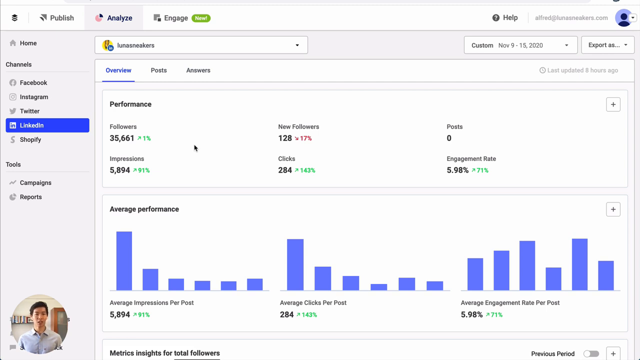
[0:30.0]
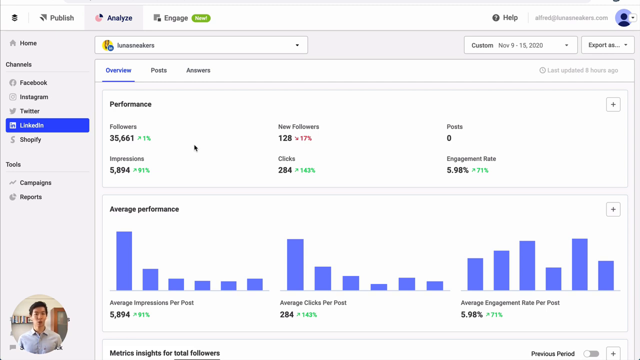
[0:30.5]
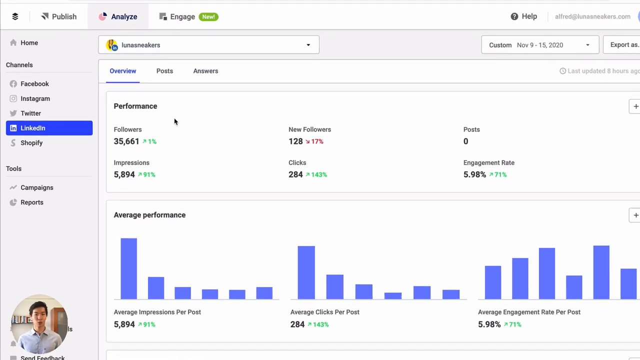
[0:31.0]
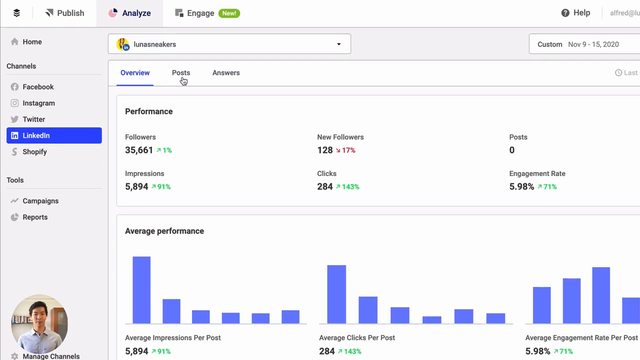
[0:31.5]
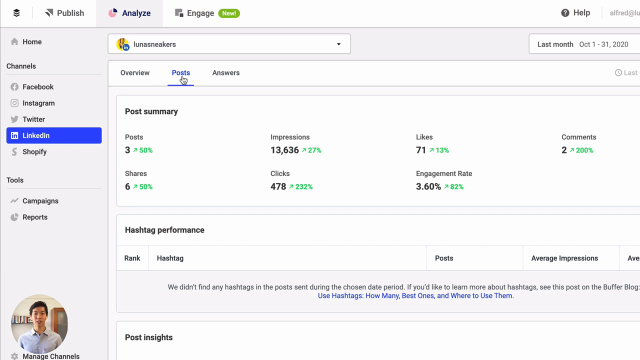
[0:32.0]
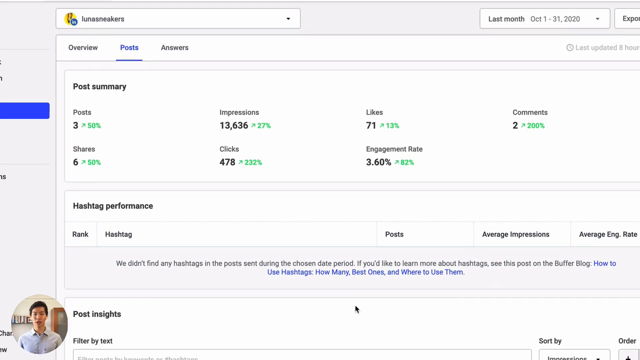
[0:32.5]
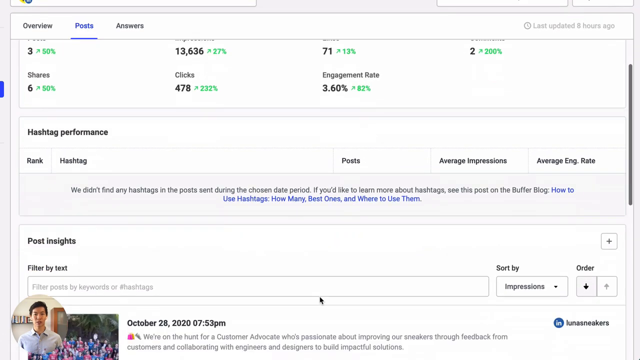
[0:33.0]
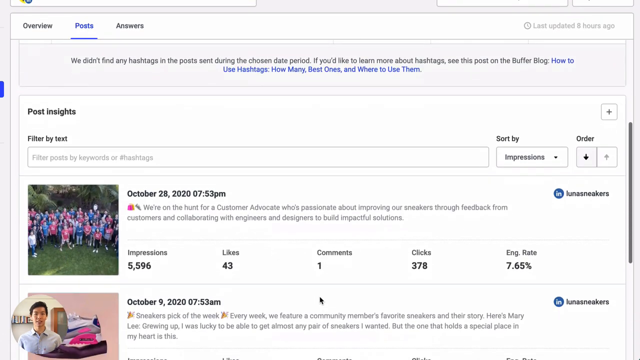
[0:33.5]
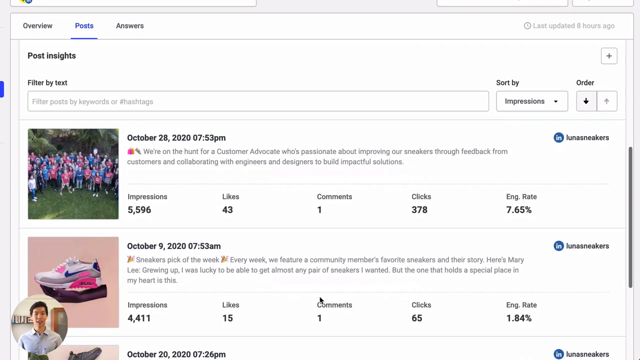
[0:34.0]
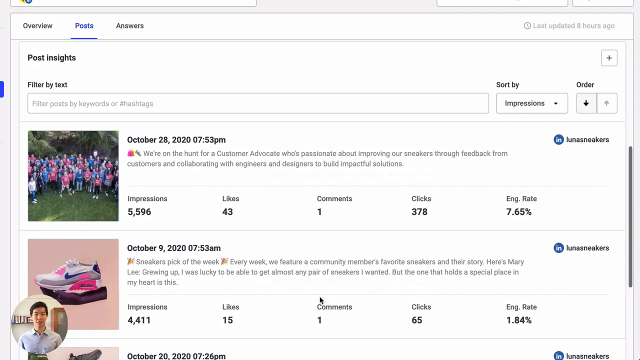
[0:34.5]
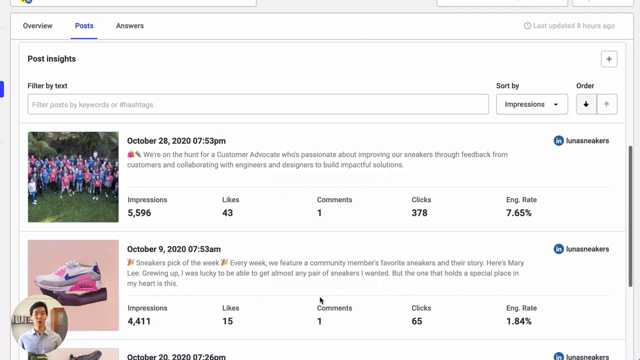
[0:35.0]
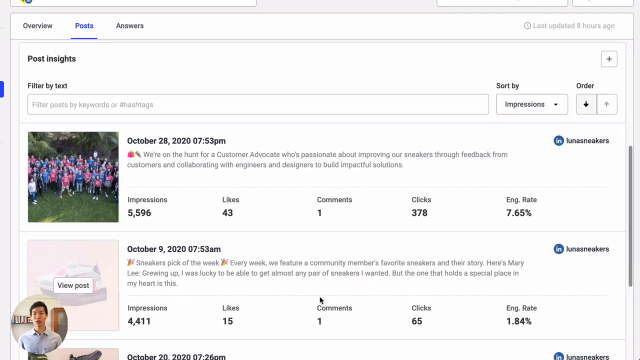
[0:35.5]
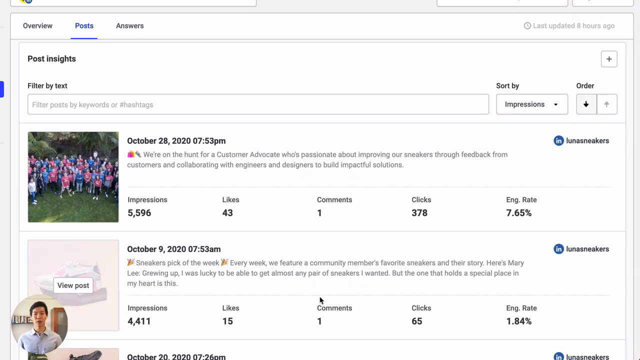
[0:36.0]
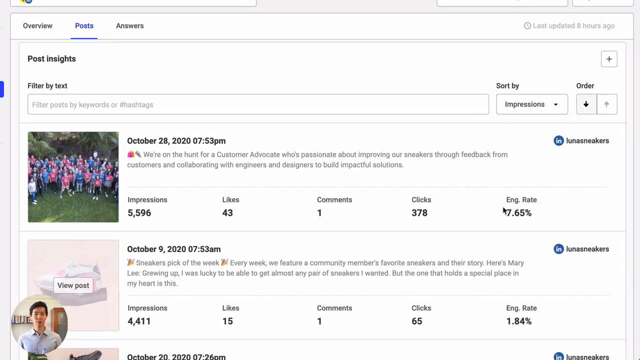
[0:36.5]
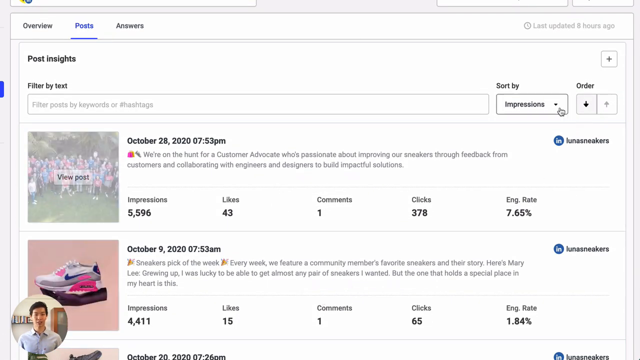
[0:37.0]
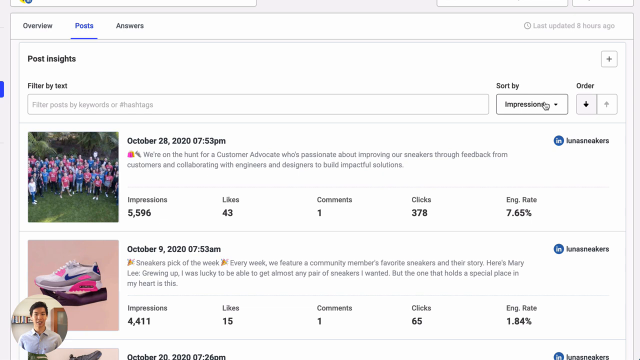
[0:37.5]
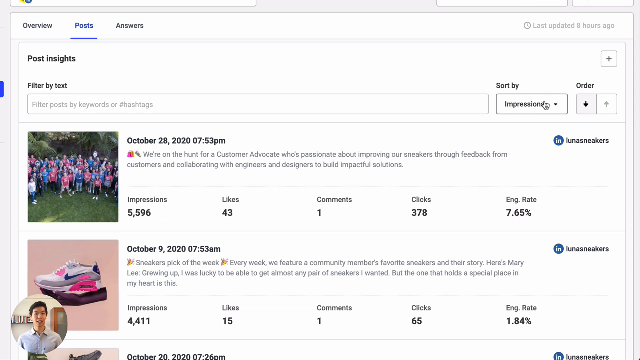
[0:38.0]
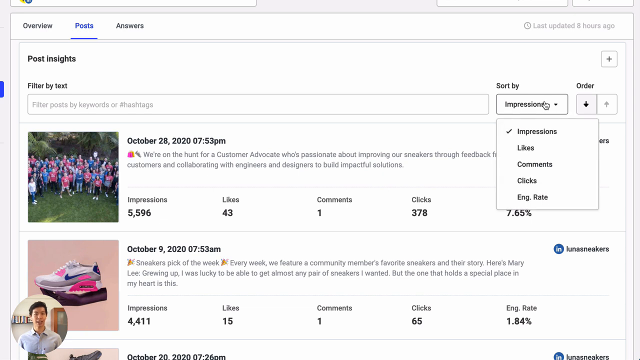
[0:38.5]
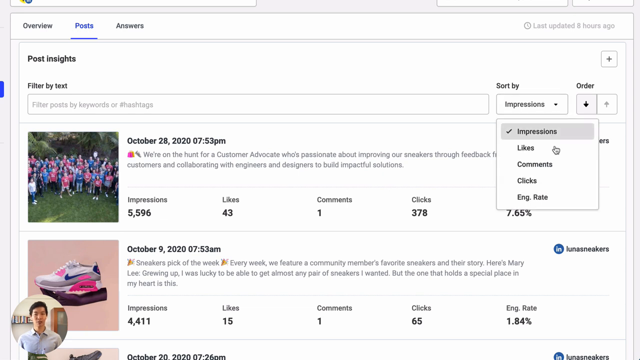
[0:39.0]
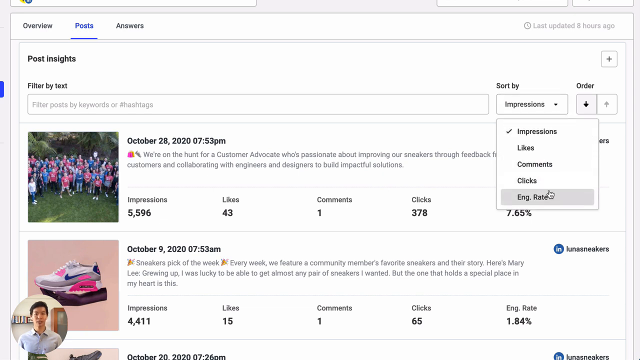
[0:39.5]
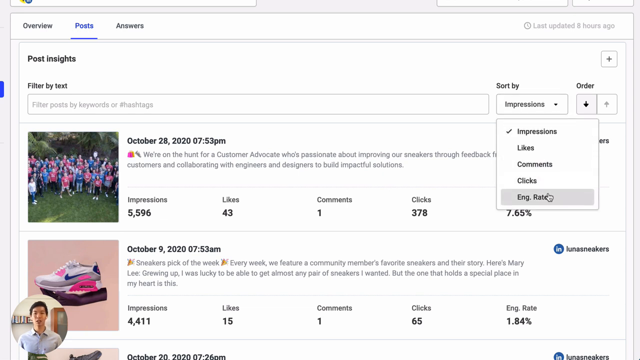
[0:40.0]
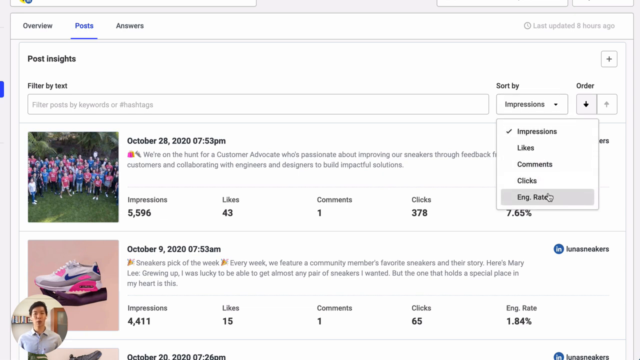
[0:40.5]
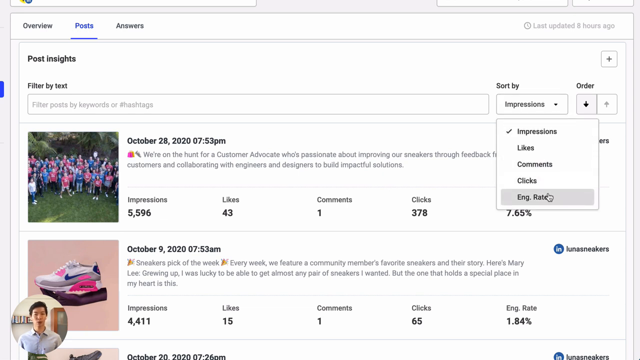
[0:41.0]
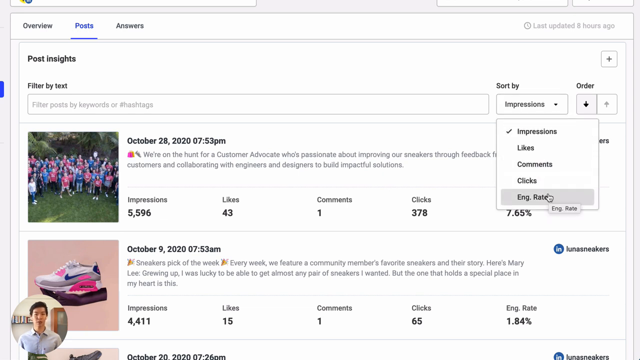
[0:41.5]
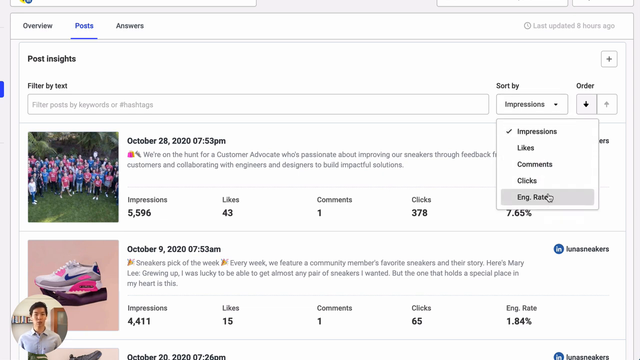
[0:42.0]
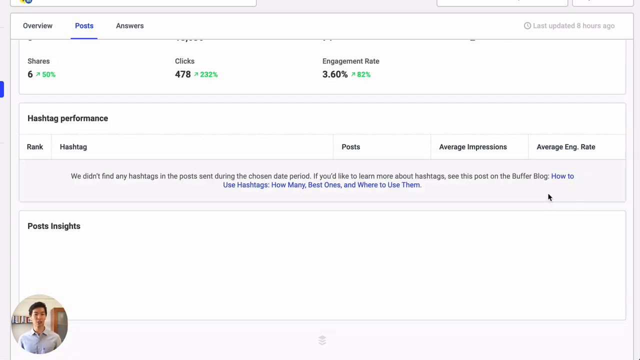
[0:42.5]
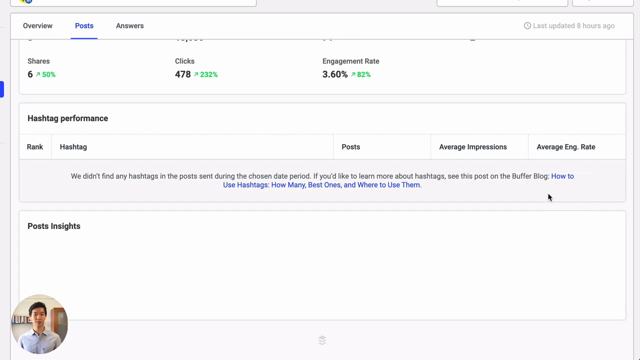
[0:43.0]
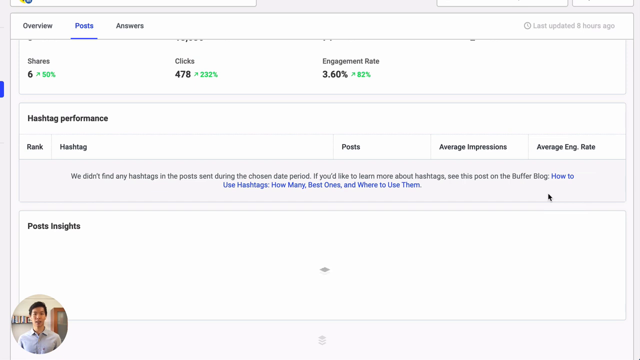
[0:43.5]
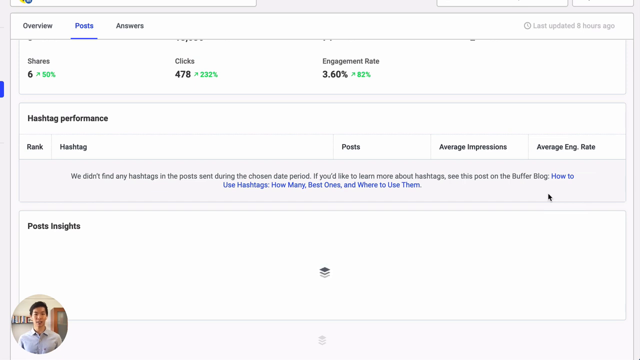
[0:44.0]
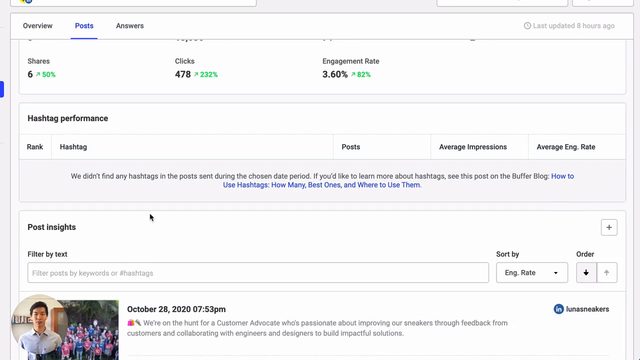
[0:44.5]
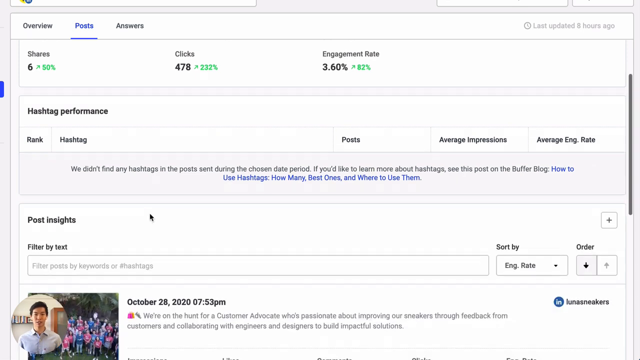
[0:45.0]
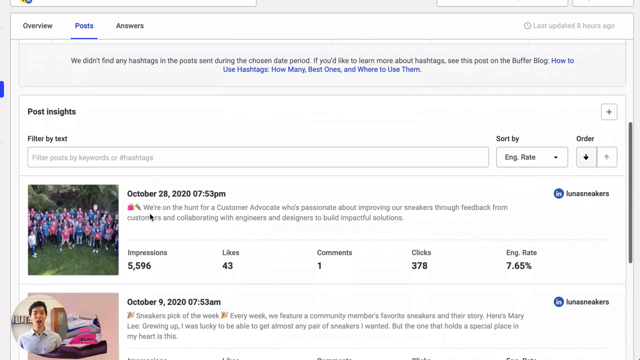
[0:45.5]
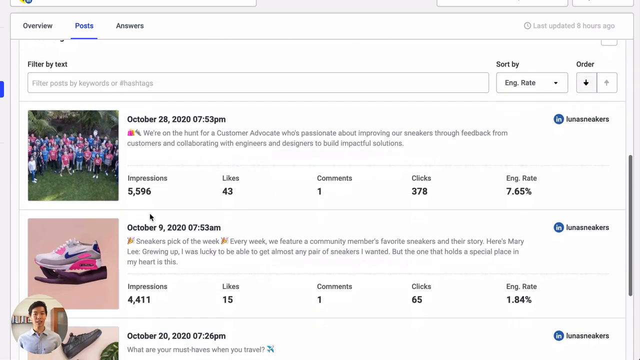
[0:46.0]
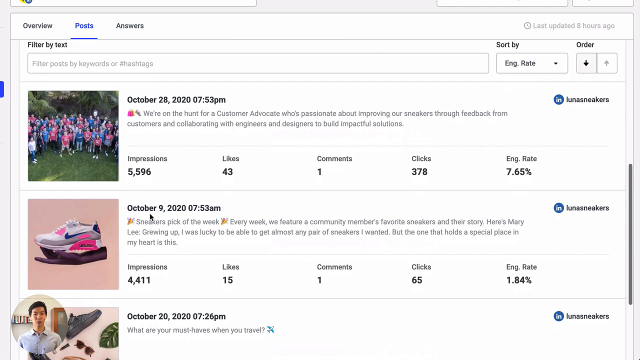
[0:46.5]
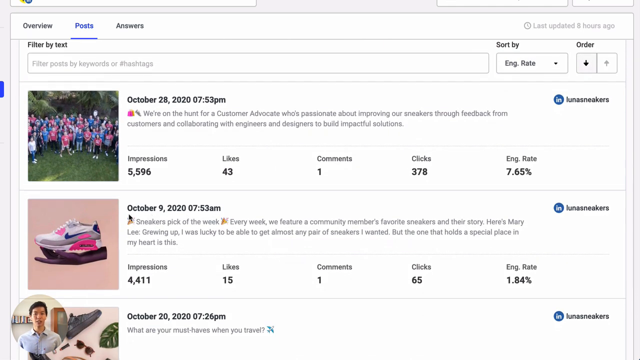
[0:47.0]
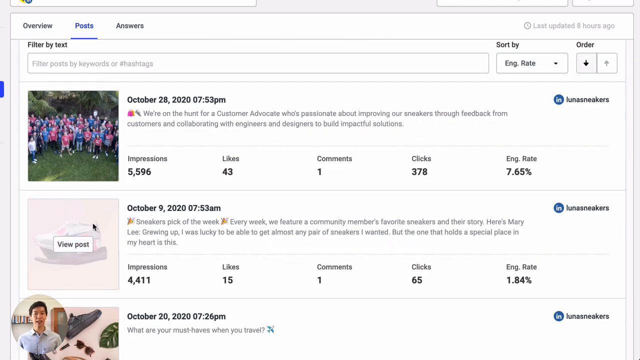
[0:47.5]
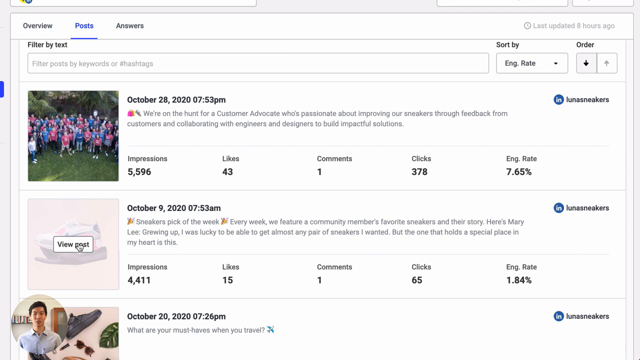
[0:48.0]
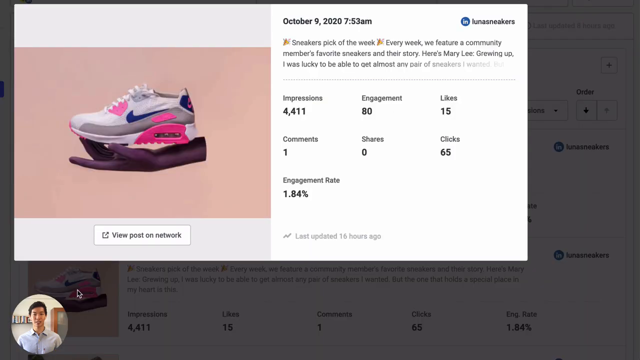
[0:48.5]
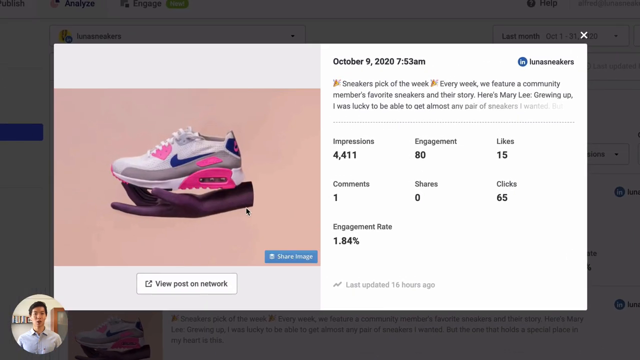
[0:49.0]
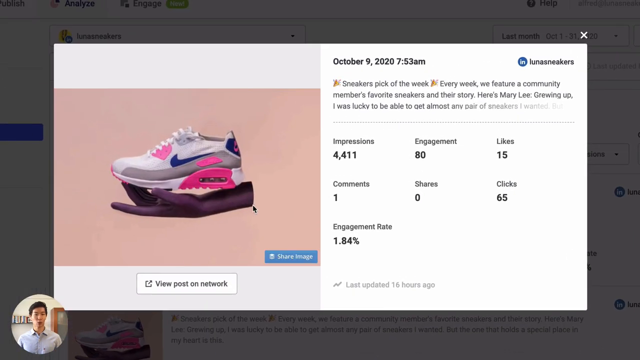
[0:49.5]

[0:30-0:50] The LinkedIn page remains on screen; judging by the mouse, it is highly likely on a Mac. The overview is shown, and the mouse clicks on Post, then travels a little down and starts scrolling. Post Insights appears, with options to sort by Impressions and change the order, above a list of different posts, including ones from October 28th and October 29th. The mouse hovers over the sort by option and clicks it, changing it from Impressions to "eng.rate". A different page follows, showing hashtag performance with columns for rank, hashtag post, average impressions and average eng.rate, but the text reads "we didn't find any hashtags in the posts sent for the chosen date and time". The page scrolls down to a post, and the mouse clicks View Post, bringing up a pop-up window of that post with more data.